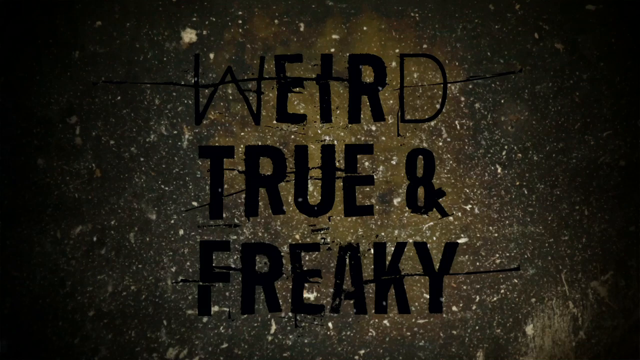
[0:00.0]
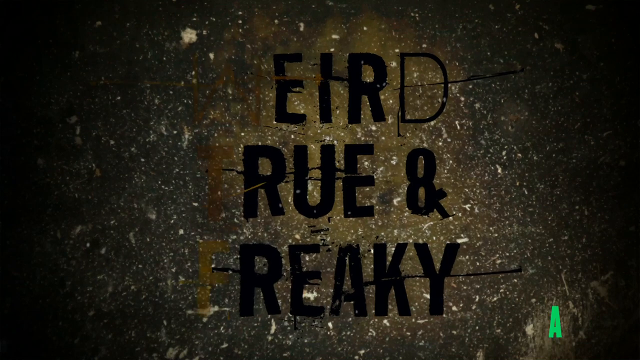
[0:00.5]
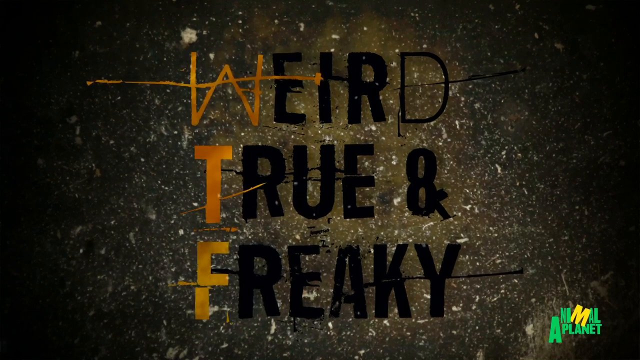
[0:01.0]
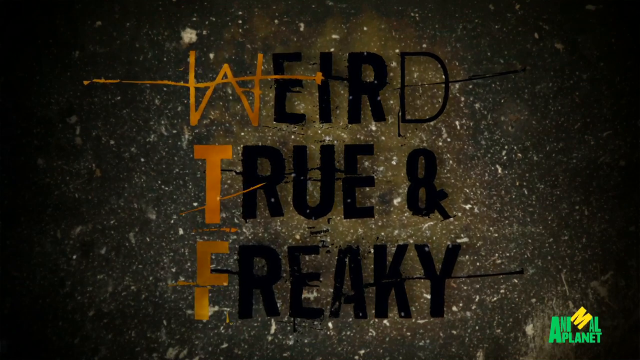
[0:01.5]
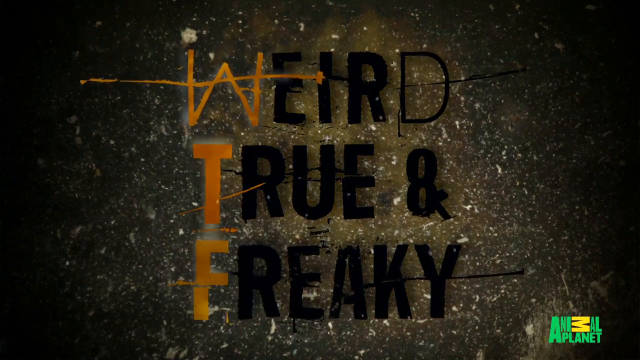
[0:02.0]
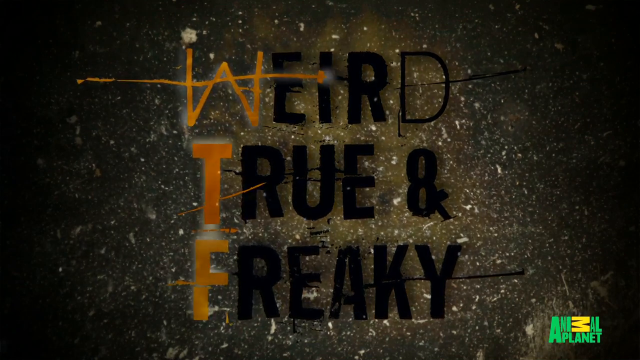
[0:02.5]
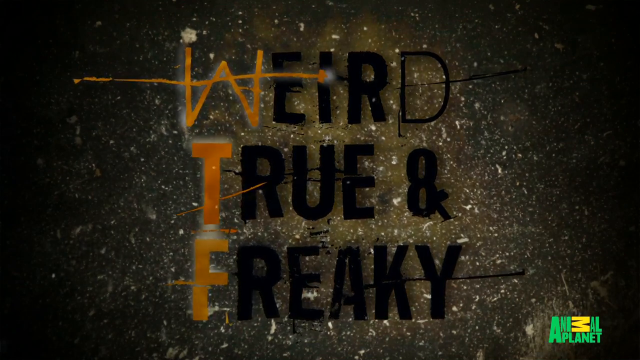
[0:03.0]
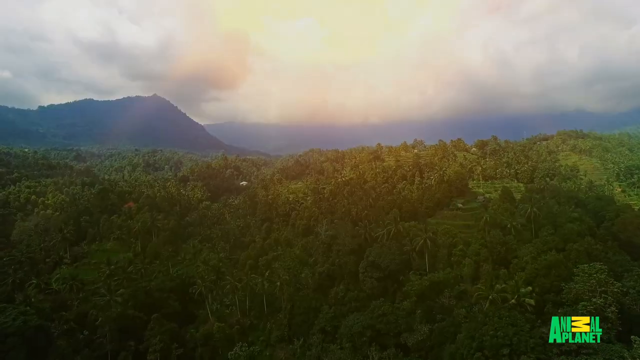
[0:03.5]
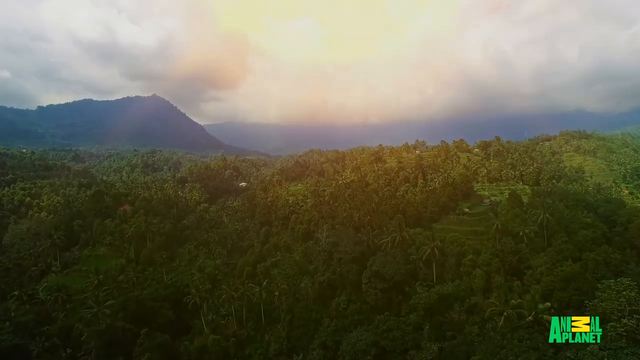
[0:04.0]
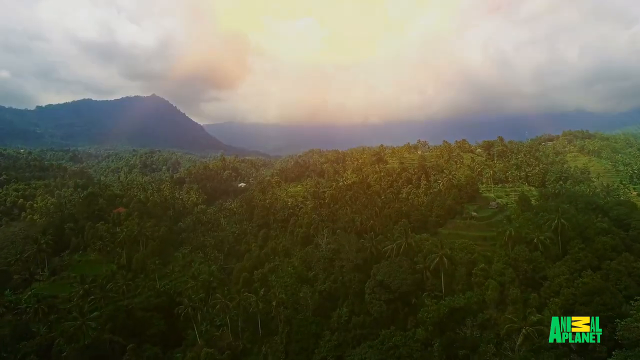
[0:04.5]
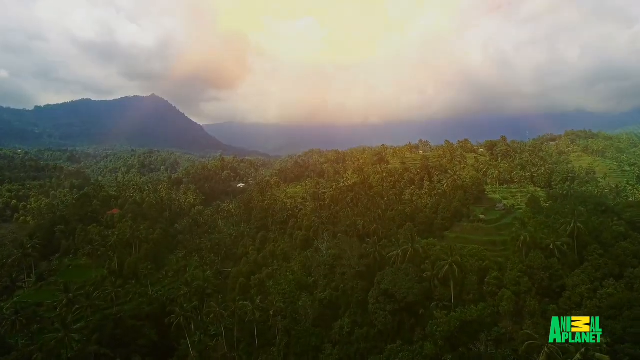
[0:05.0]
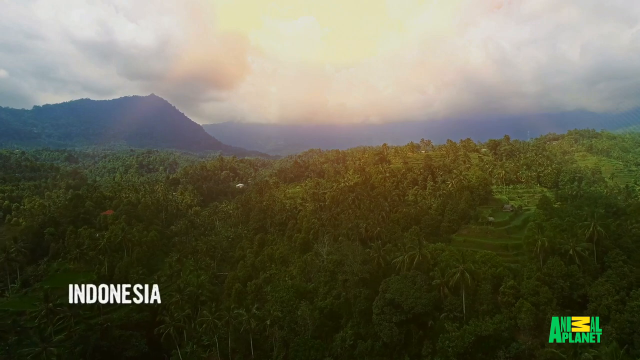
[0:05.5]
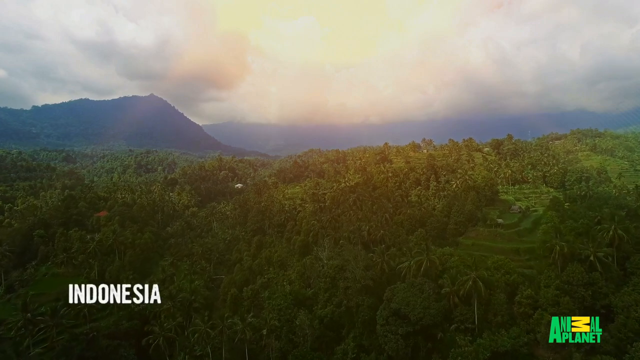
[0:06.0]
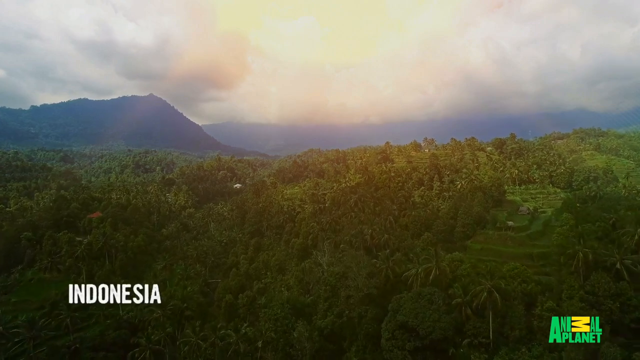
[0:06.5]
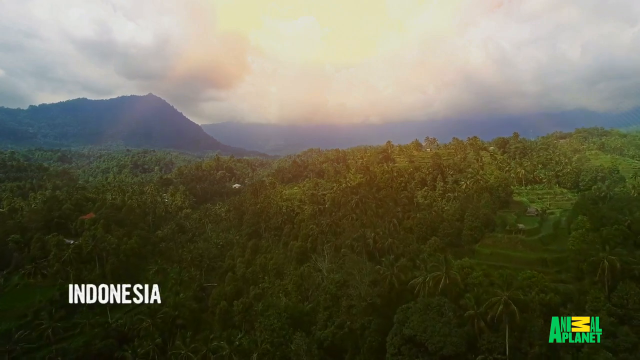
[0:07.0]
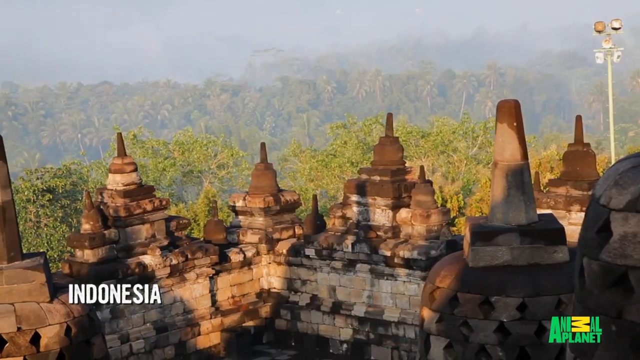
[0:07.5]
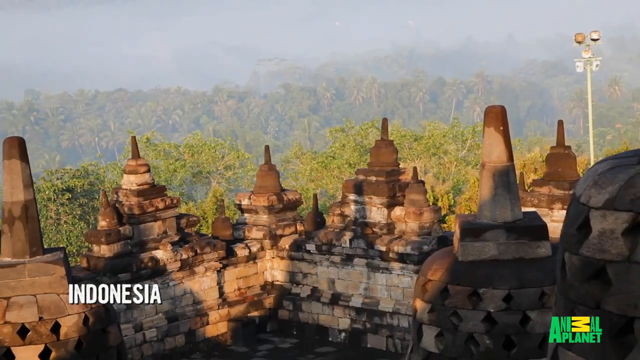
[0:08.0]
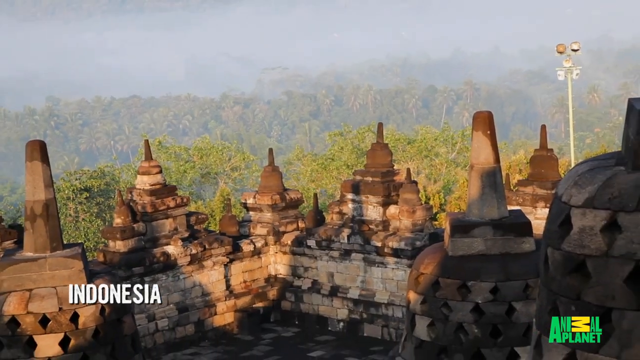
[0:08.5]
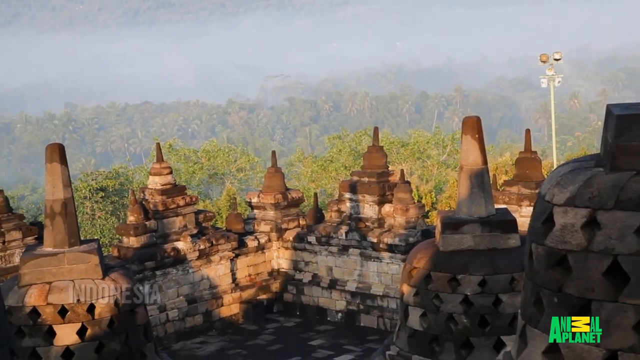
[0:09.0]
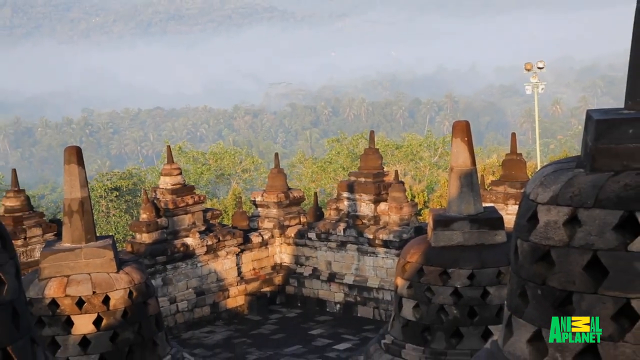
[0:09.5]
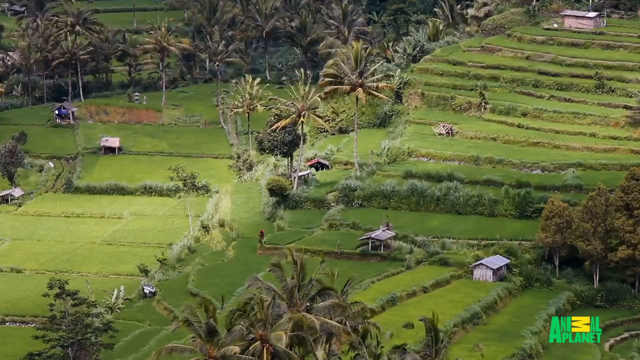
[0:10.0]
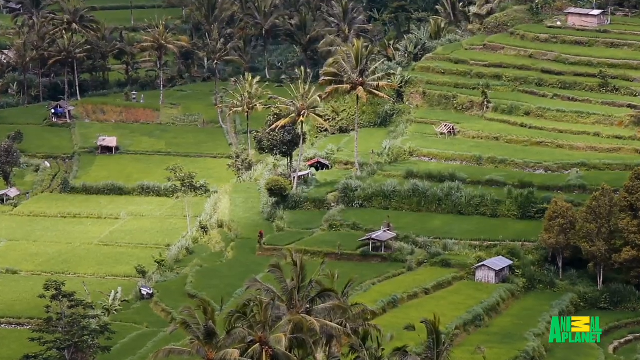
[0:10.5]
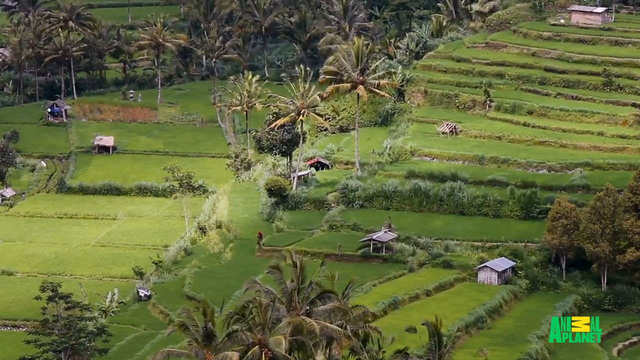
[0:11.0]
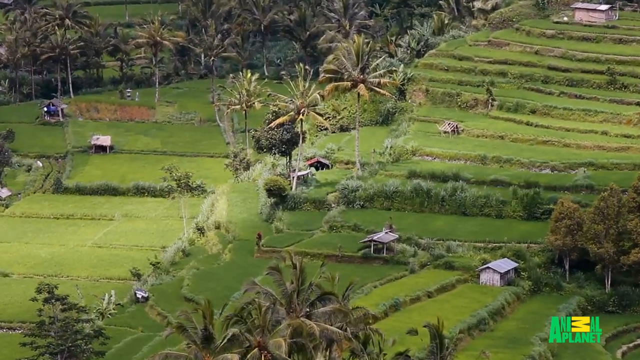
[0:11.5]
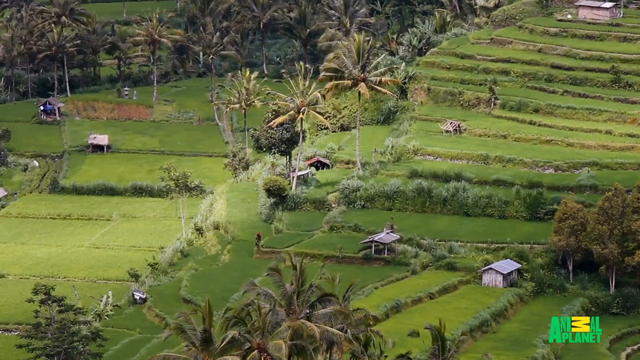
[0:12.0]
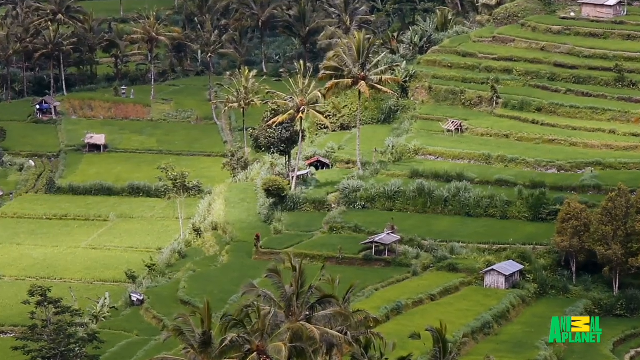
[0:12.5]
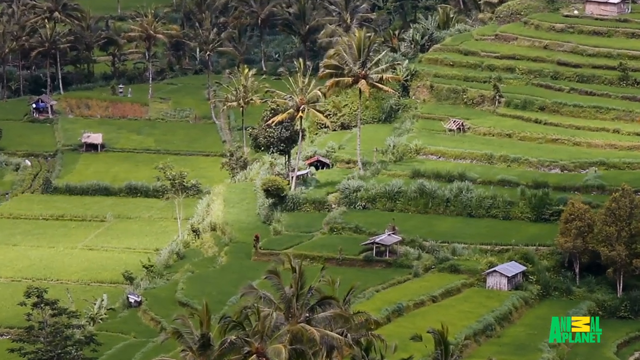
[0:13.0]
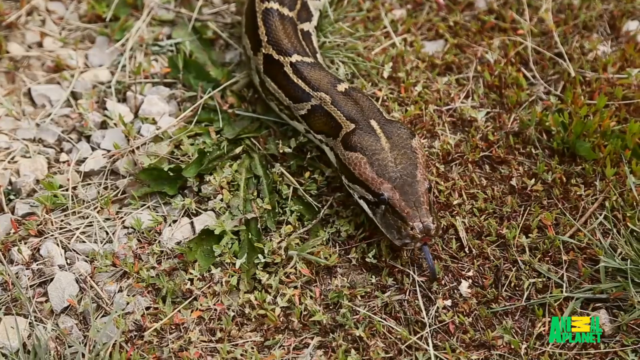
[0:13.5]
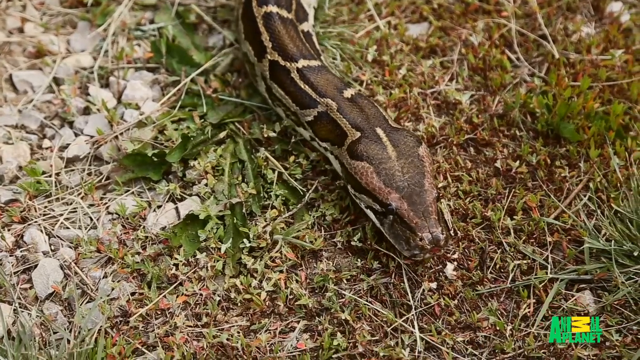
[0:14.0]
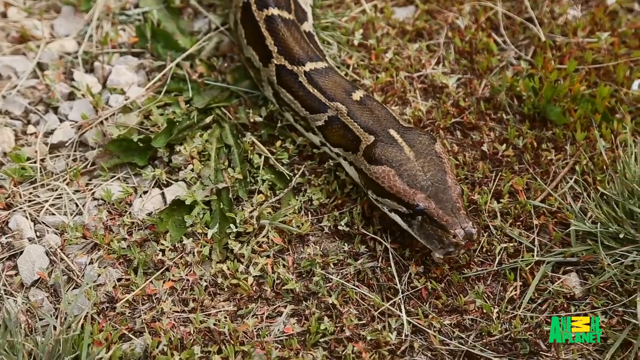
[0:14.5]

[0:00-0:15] This video, called Weird, True & Freaky of Indonesia, is on the Animal Planet Network. It starts with a snake crawling around on green grass. Some kind of temple is shown. The snake leans up against a tree and sticks its tongue out. The scene changes to a green snake wrapped around a branch in a tree. It then immediately cuts to a middle-aged man who appears to be giving an interview; his last name is Redenberg. Next comes what looks like a snake.